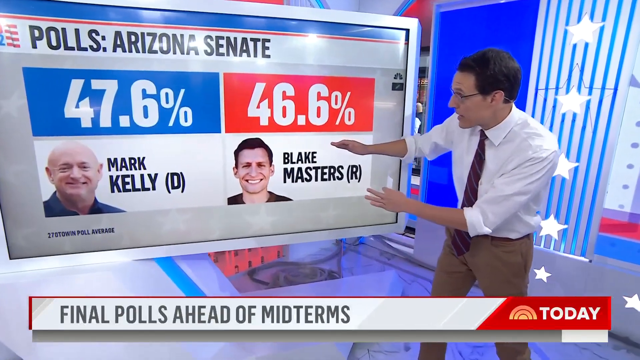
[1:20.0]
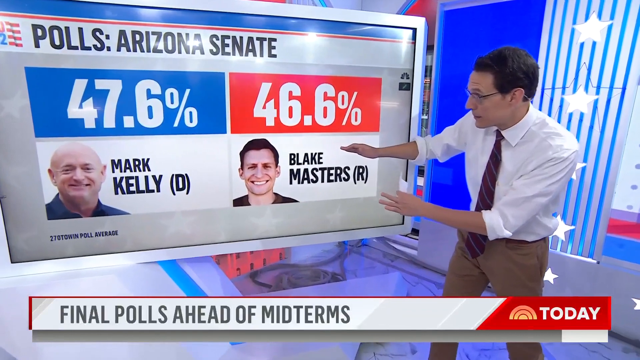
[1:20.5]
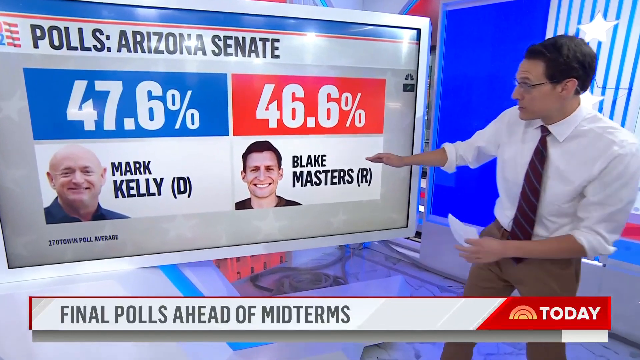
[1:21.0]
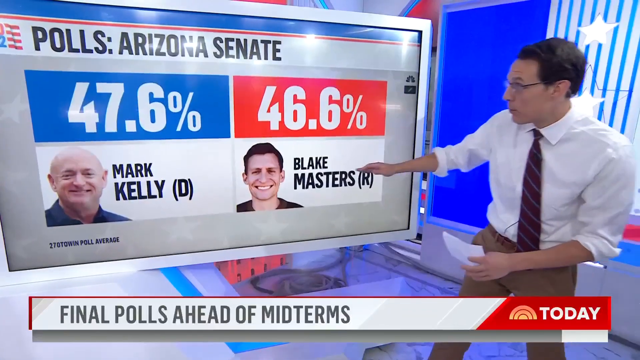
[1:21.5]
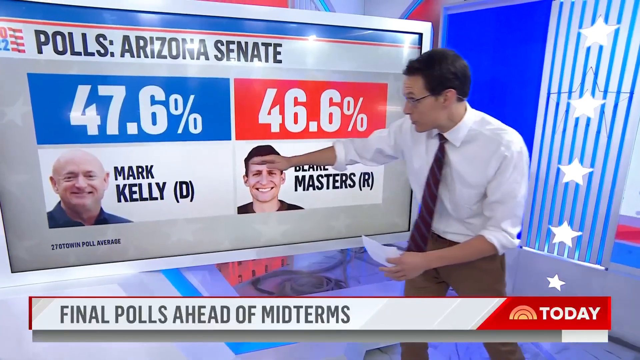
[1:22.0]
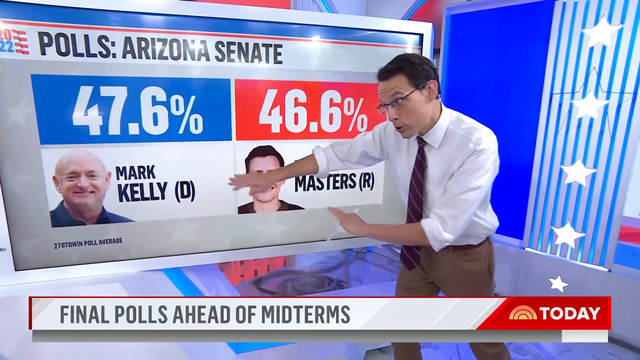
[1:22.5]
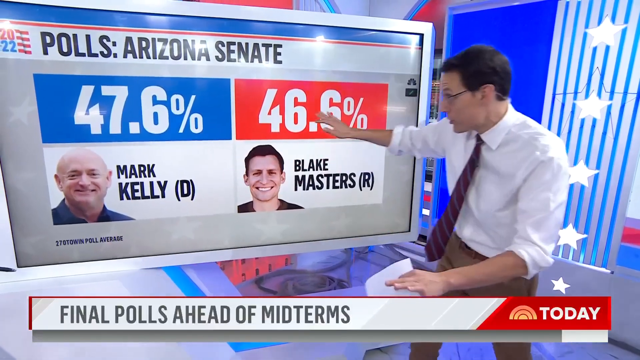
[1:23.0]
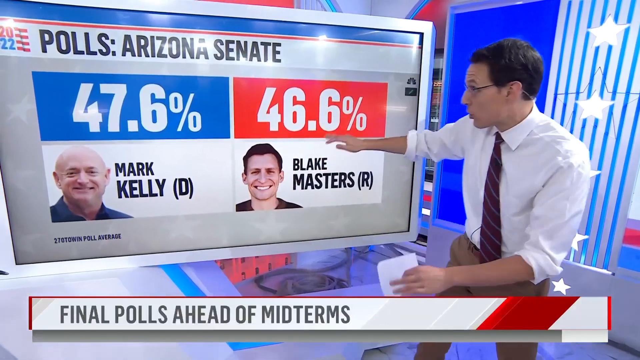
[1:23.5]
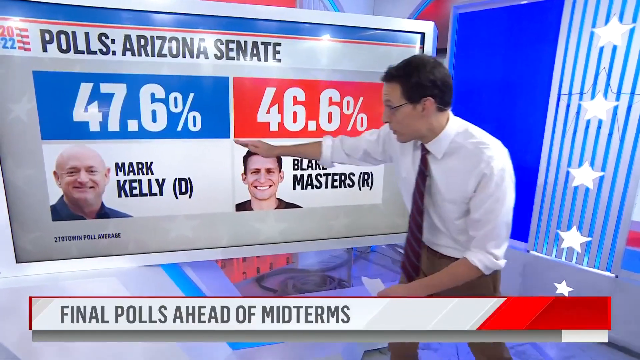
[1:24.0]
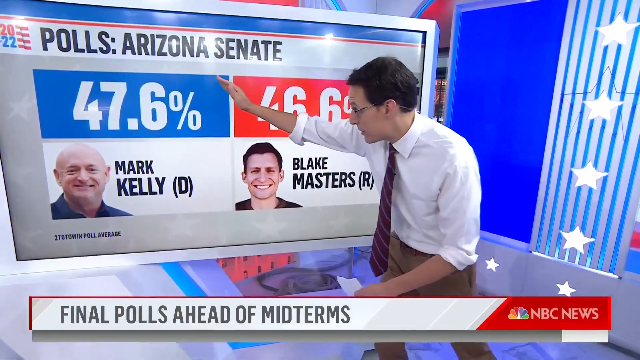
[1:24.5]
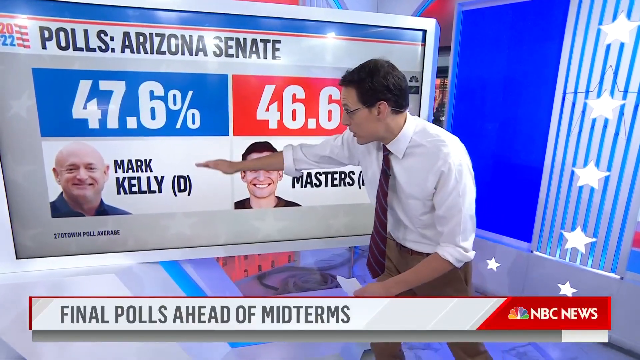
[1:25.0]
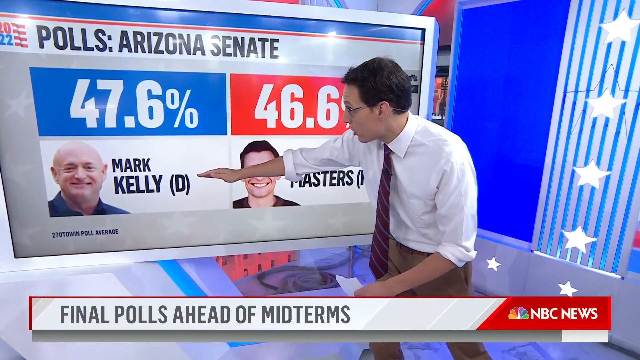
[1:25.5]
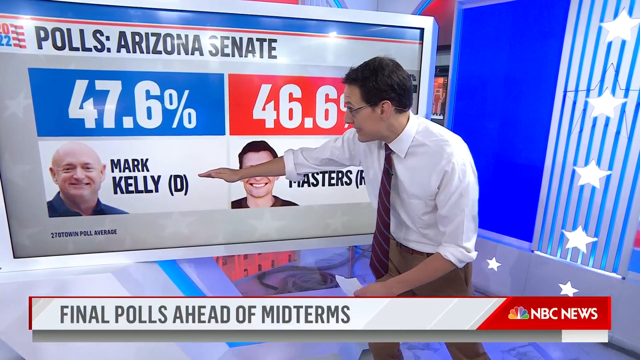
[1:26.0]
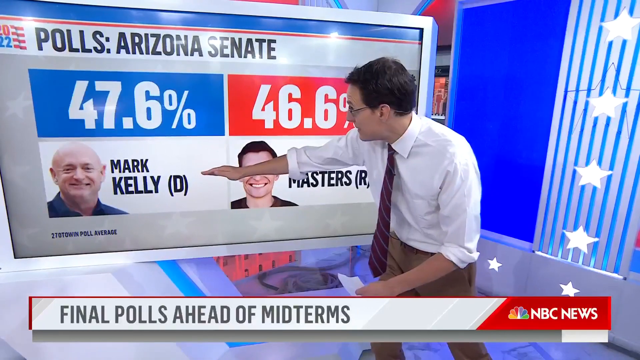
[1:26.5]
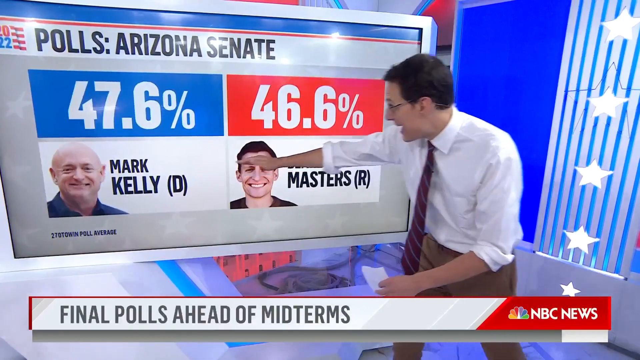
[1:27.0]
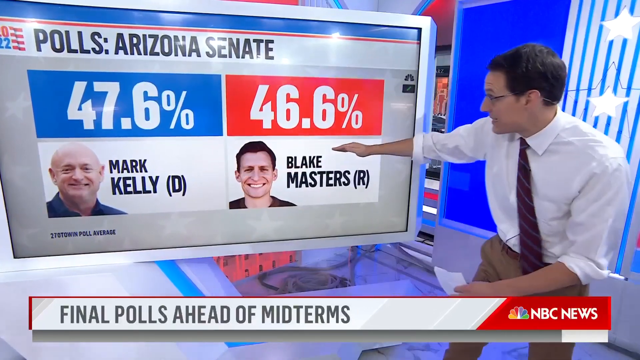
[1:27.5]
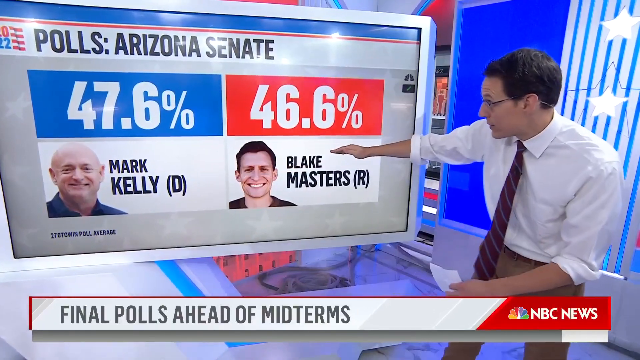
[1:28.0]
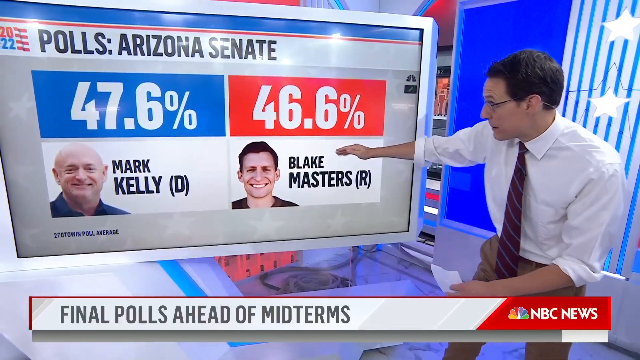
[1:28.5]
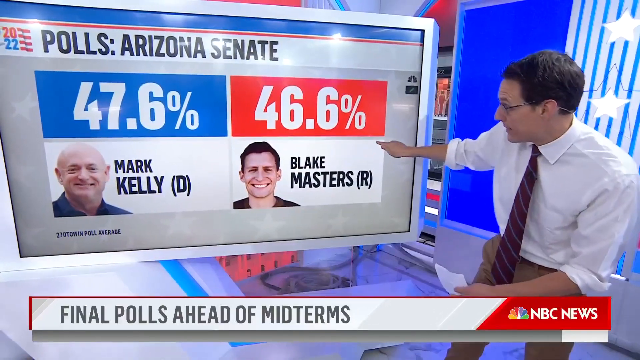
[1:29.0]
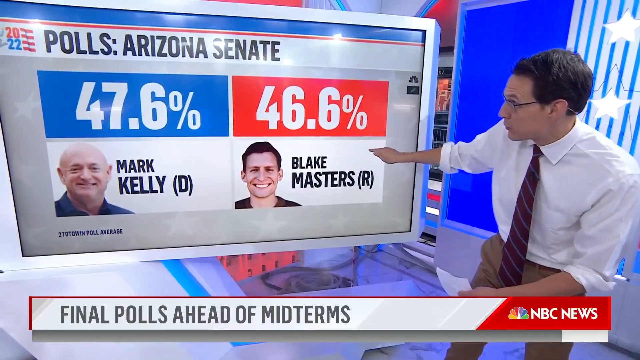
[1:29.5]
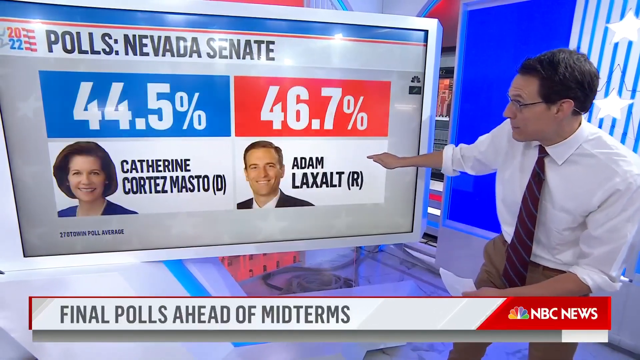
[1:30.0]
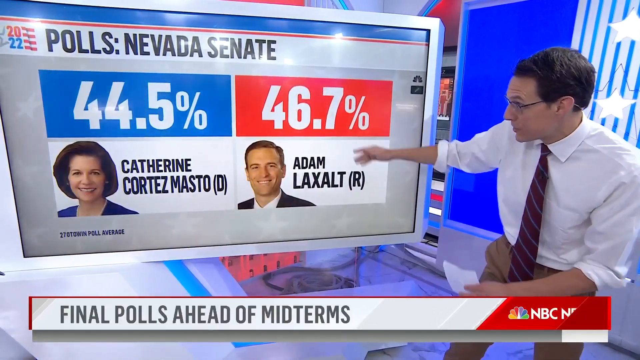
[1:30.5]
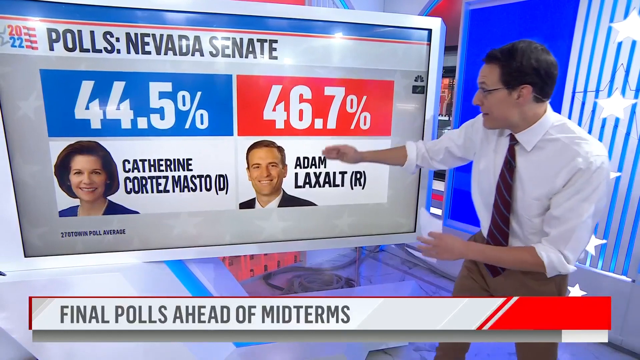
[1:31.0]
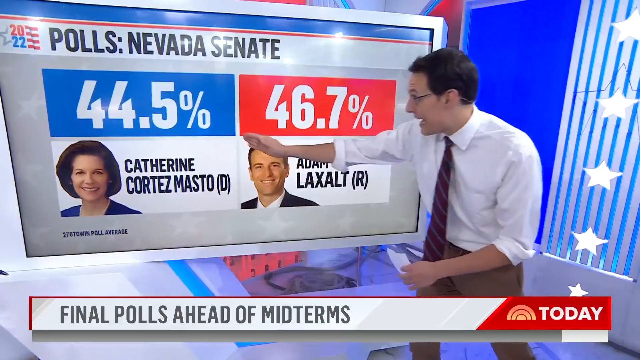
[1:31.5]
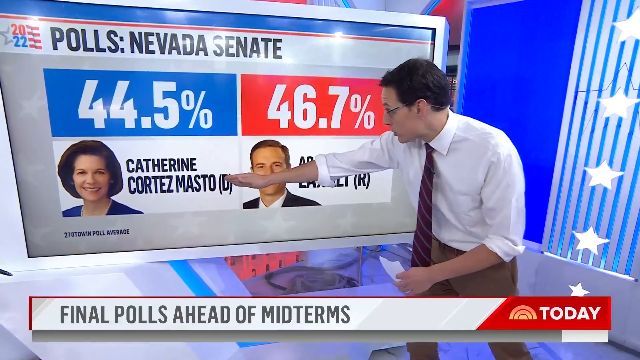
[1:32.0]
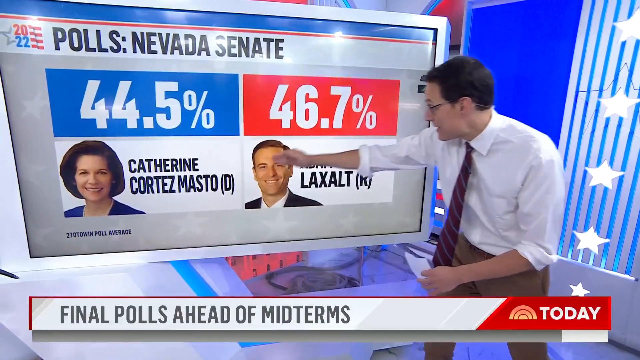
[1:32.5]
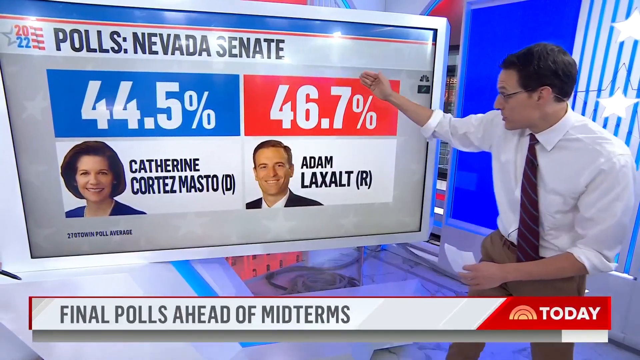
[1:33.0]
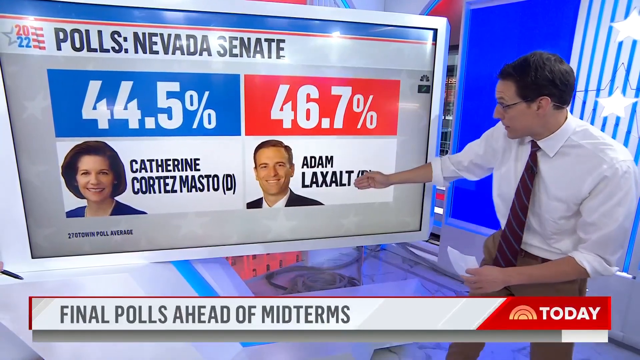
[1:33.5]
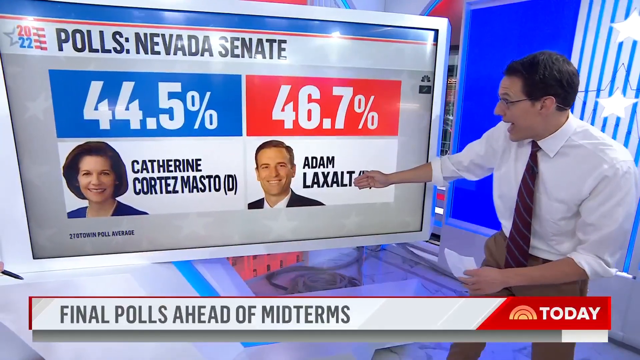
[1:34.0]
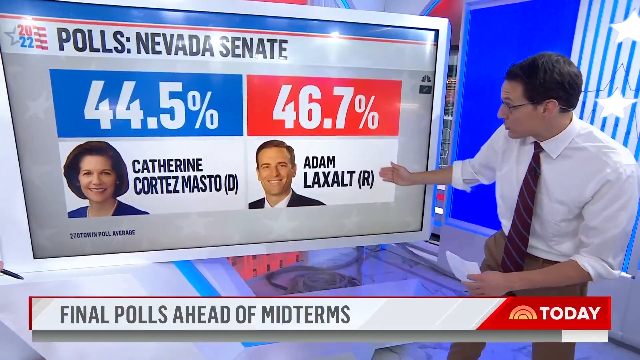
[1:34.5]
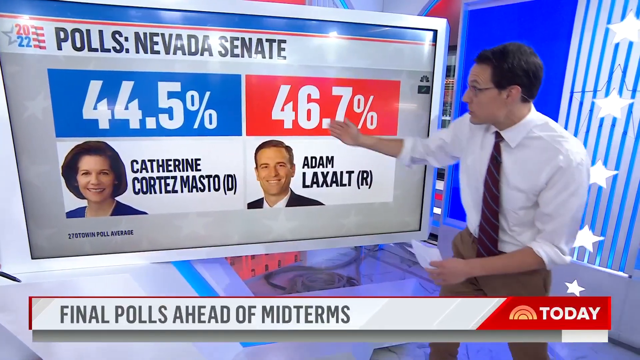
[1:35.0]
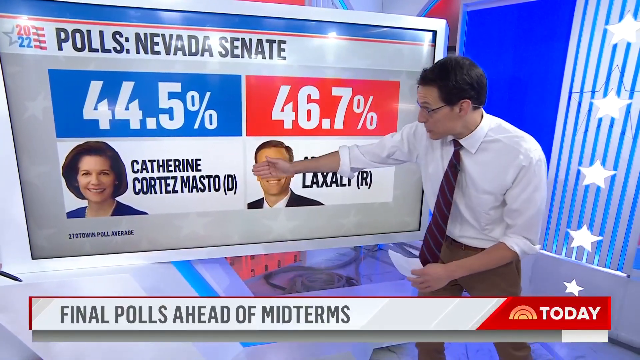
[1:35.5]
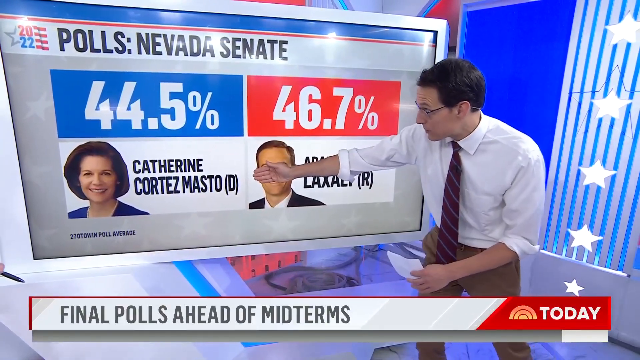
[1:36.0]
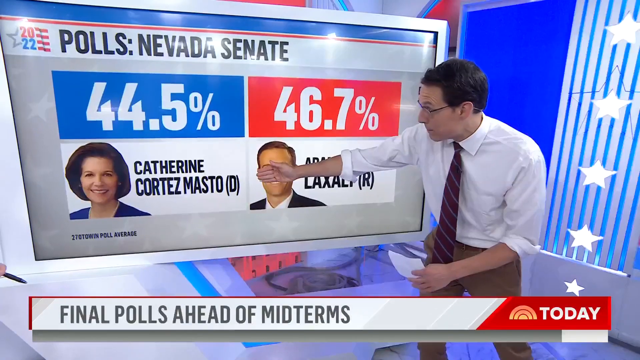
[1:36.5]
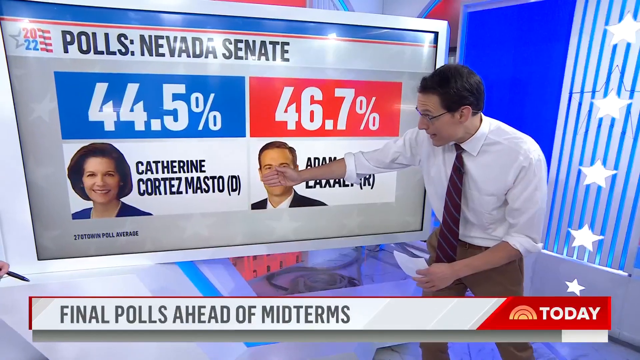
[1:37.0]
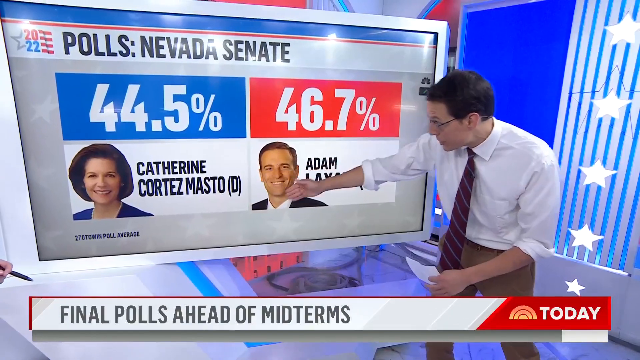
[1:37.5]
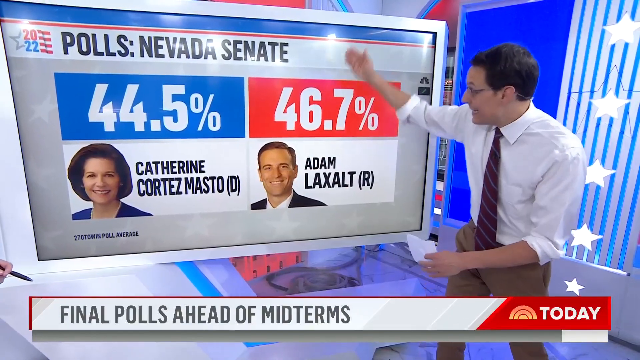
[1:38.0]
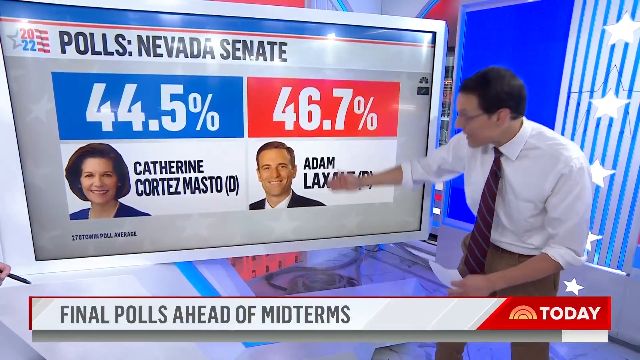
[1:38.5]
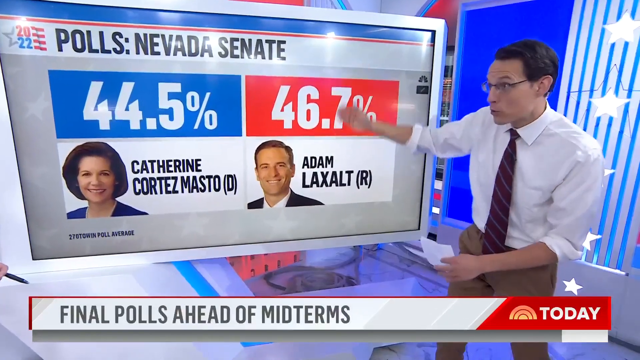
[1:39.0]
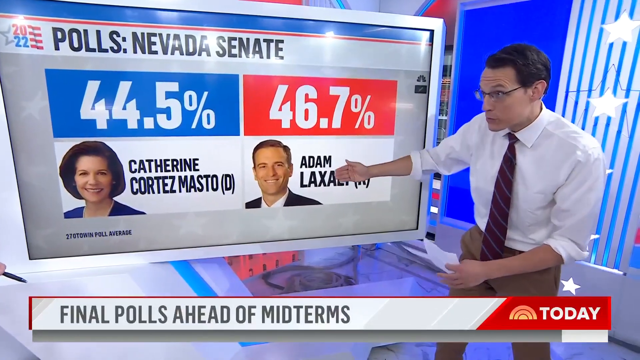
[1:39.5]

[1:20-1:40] The man continues with the numbers for Mark Kelly and Blake Masters, and text then reads "the final poll ahead of midterms, NBC News." Another screen reads "polls, Nevada Senate," showing 44.5% for Catherine Mesos, a Democrat, and 46.7% for Adam, a Republican. The man still points at the screen, gesturing toward different sections of it. The studio is brightly lit, with stars everywhere, stripes, blue on the wall and clean flooring. The video is clear, with no grain.